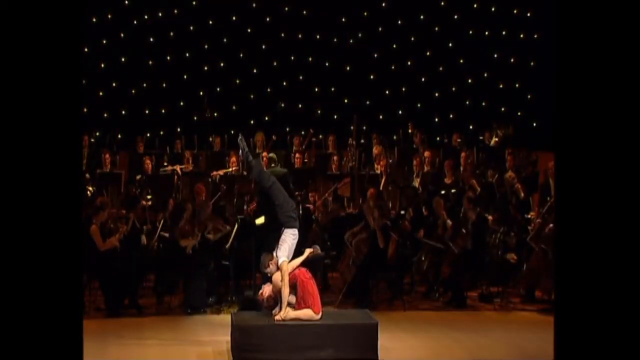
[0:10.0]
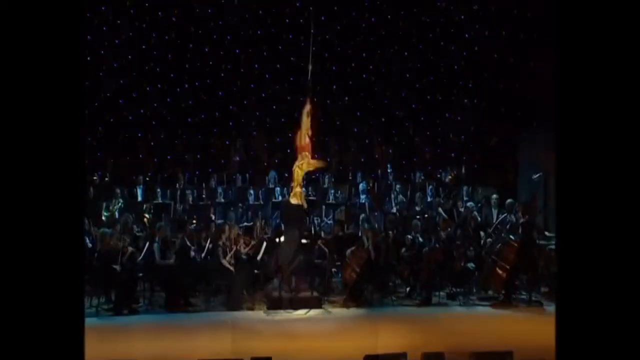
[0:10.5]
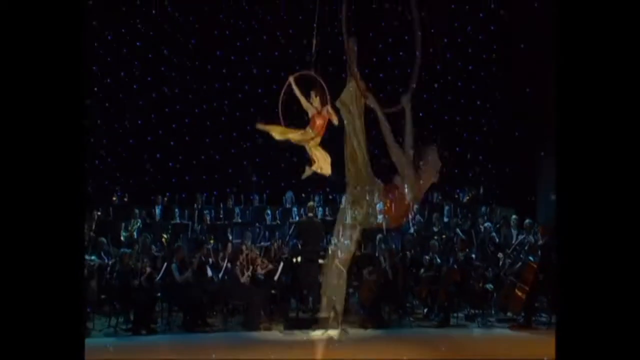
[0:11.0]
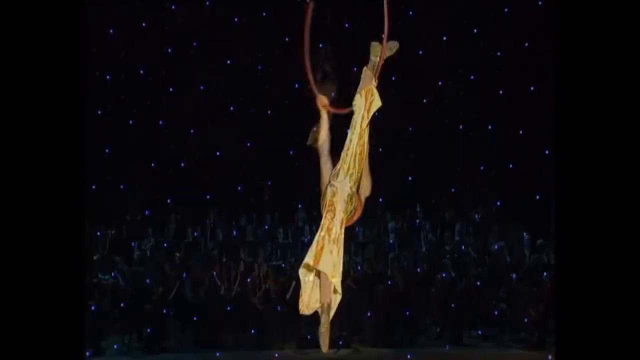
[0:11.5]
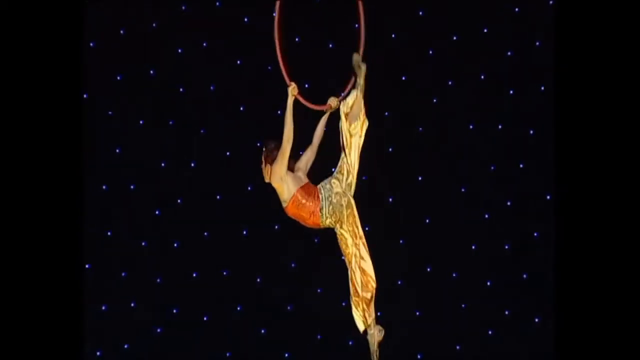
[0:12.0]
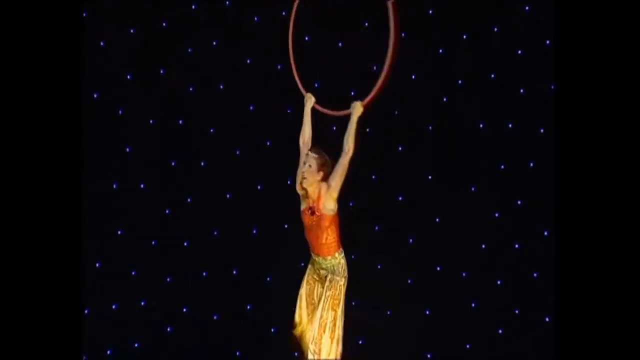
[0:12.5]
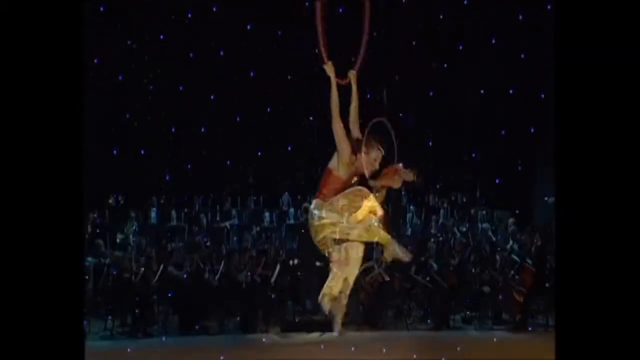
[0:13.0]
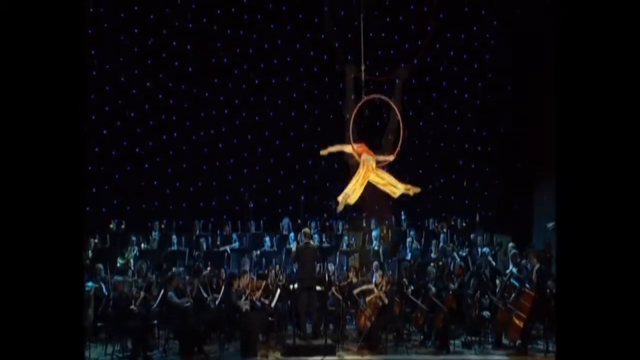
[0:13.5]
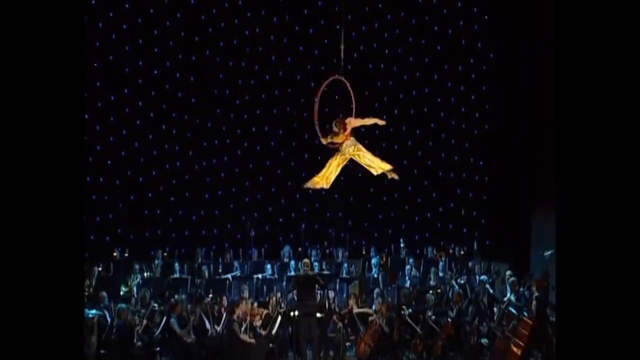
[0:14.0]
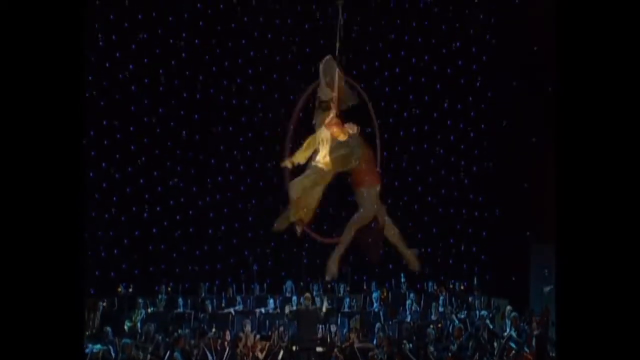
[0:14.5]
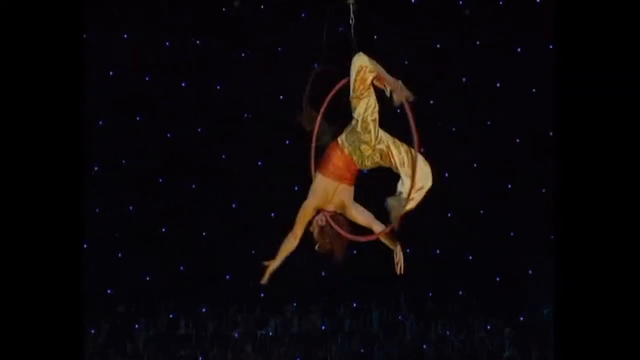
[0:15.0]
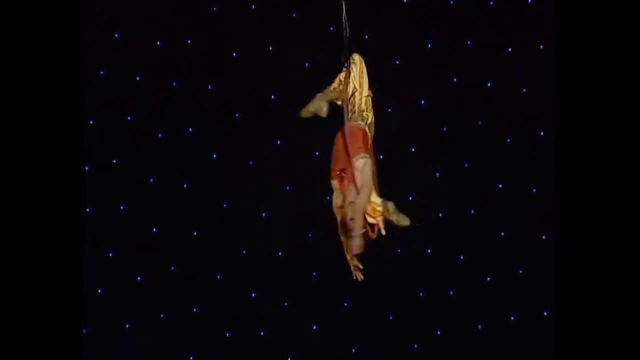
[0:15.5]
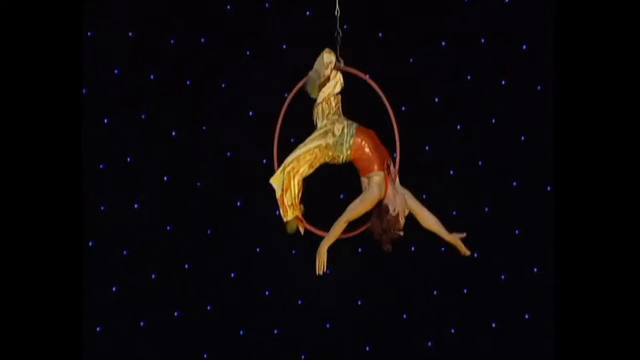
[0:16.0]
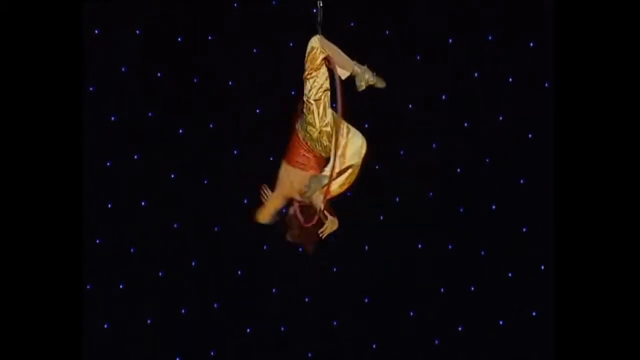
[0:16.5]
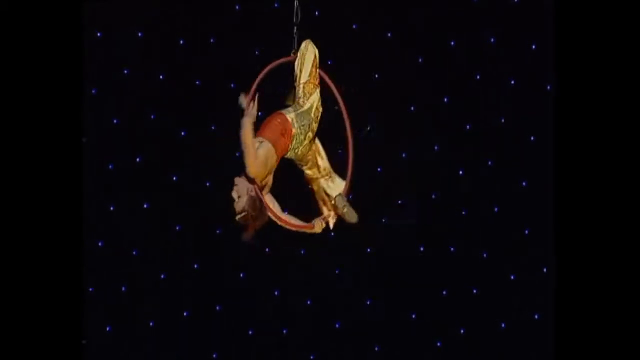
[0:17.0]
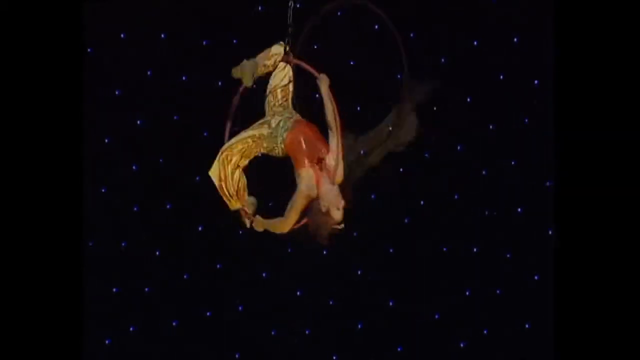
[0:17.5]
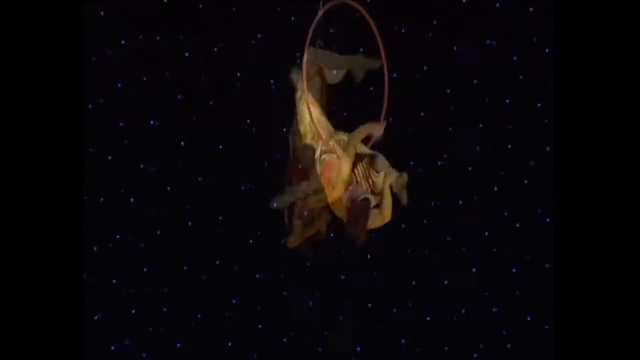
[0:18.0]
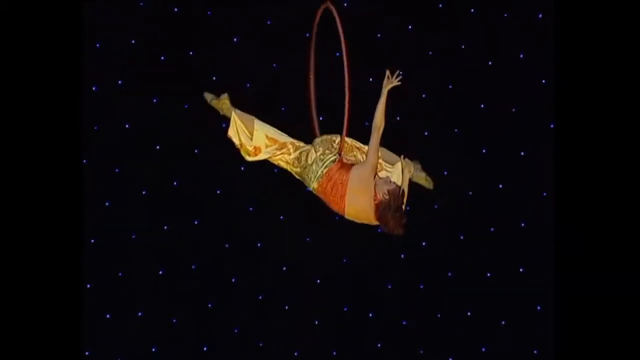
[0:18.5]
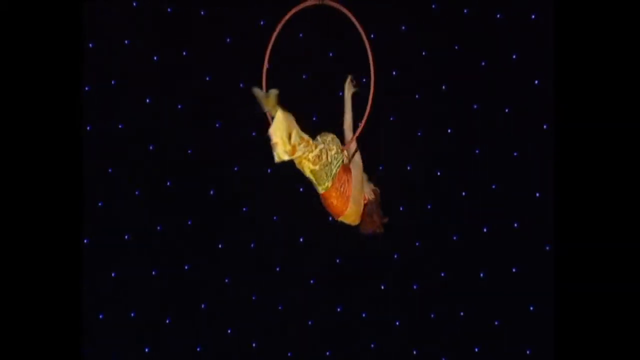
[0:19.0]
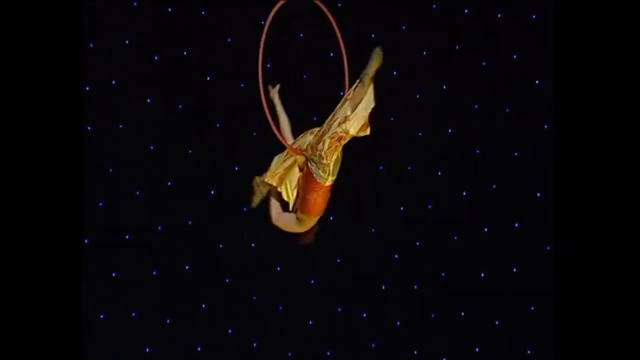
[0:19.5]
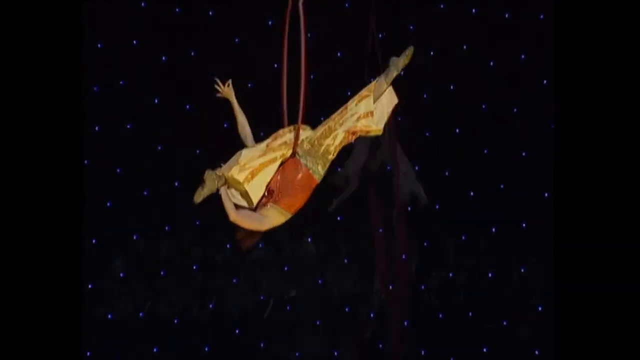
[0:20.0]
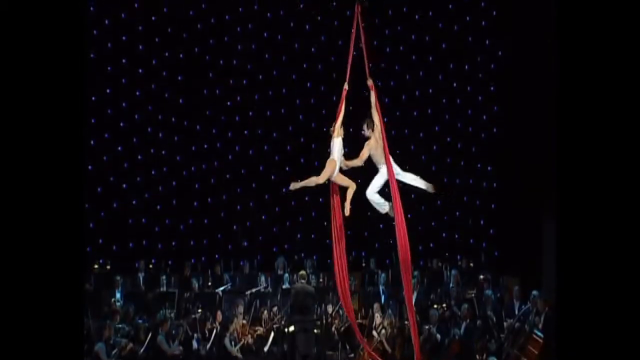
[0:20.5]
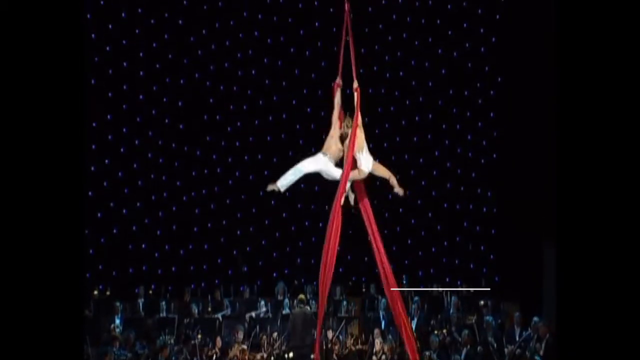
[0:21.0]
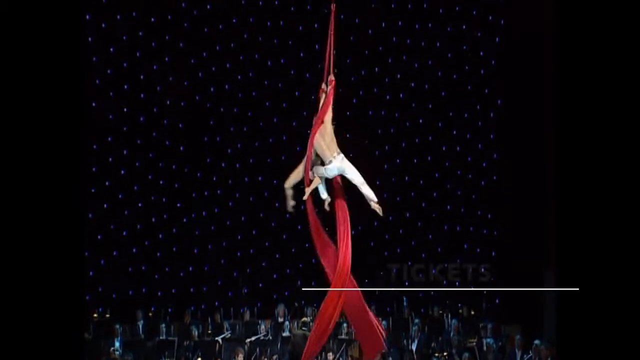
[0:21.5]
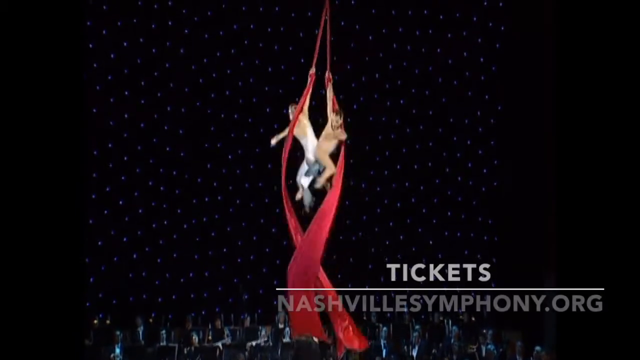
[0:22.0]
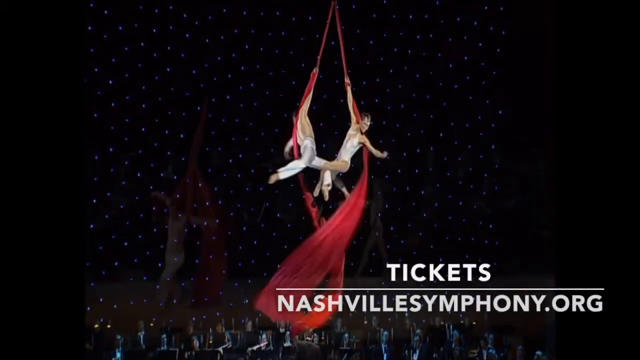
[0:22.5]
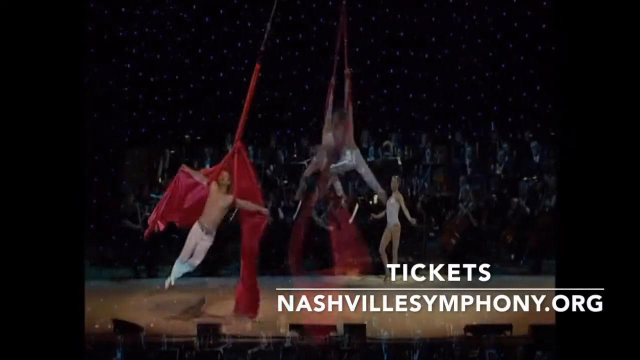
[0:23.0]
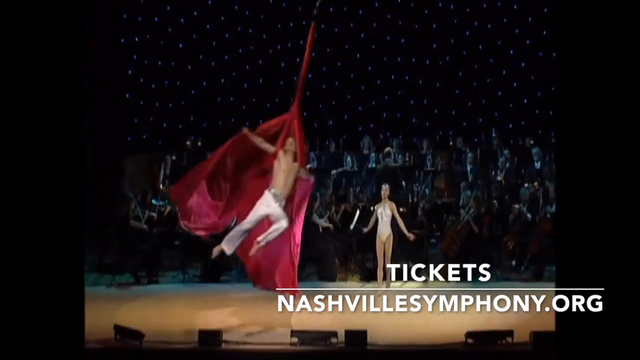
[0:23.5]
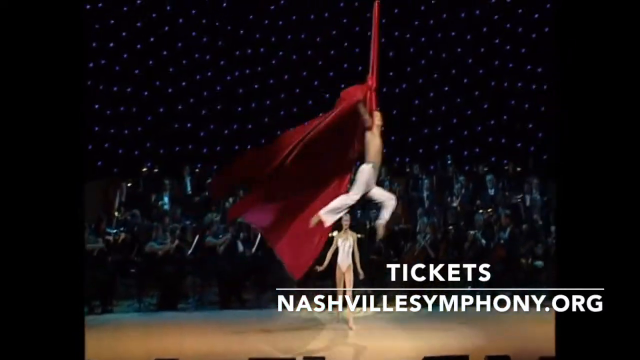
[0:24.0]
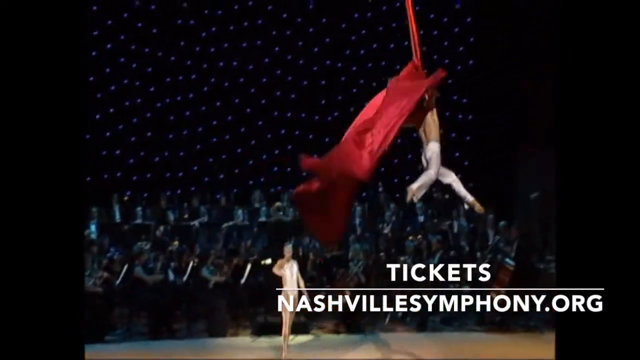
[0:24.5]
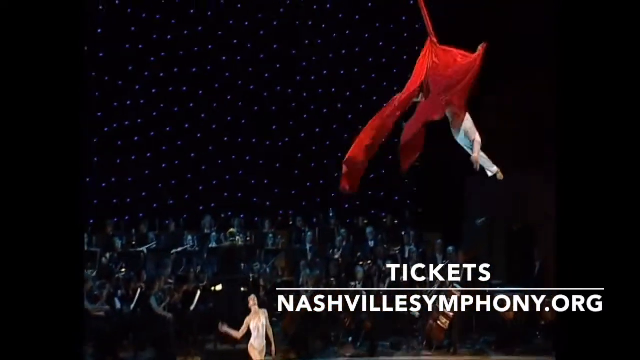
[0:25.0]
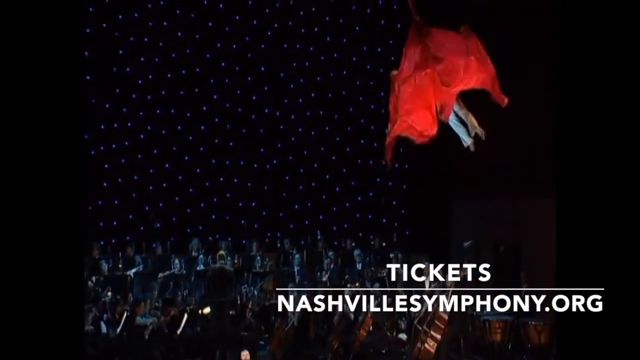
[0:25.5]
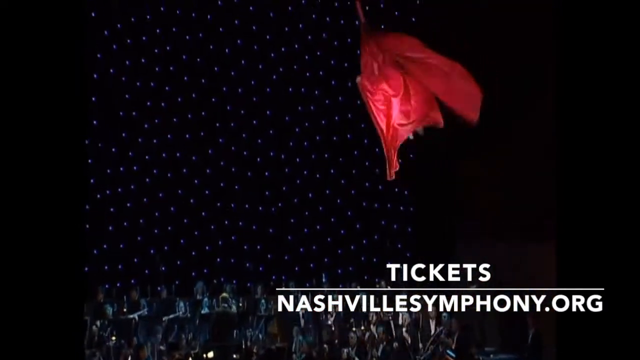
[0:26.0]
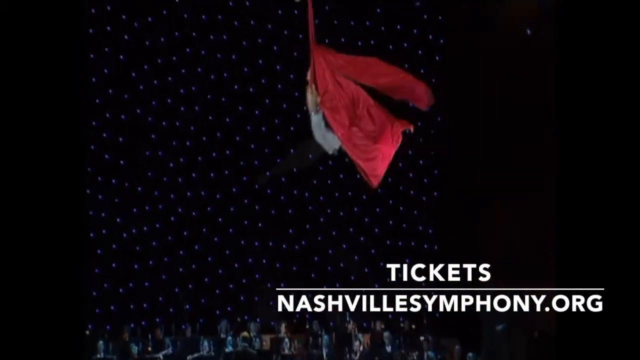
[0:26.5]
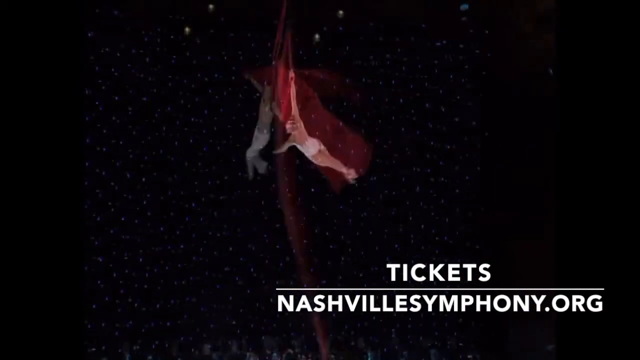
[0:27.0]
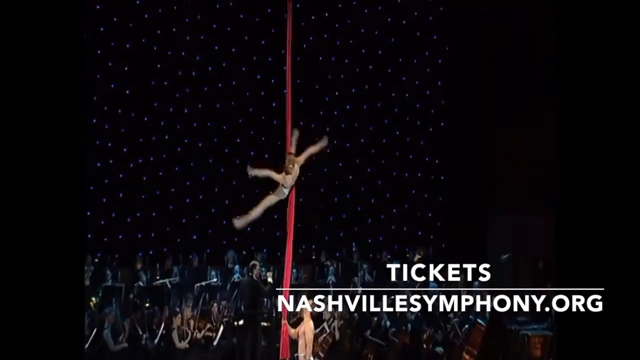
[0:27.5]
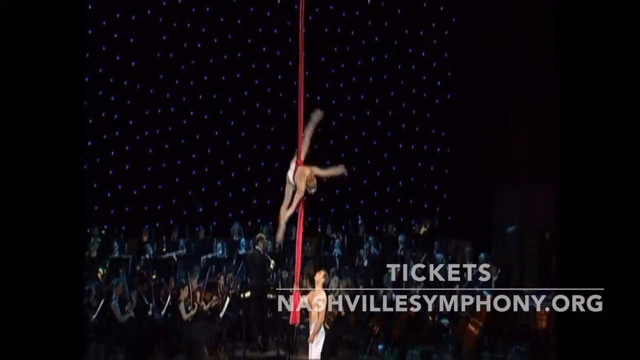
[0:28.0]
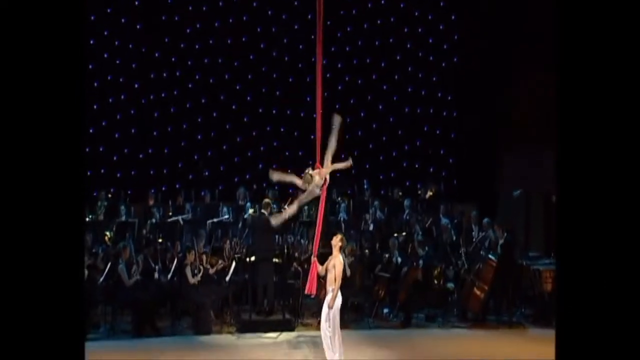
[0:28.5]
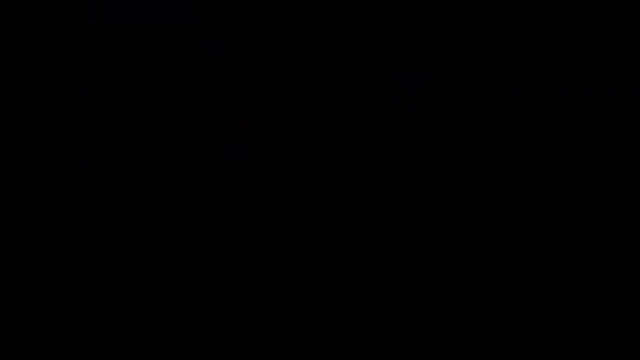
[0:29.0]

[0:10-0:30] The couple performs one of these complex demonstrations. The woman, in her red suit, is on her knees, stretching back in a very flexible way, while the man is on top of her with his arms on the ground and his legs up in the air, keeping his balance without falling. In another scene, the woman does more acrobatics on a ring that lifts her to the ceiling. Two other acrobats, a woman and a man, go up to the ceiling on two very long red ribbons, spinning with two legs together to maintain the axis of rotation. Text on the right reads "TICKETS NASHVILLESYMPHONY.ORG". In the background, another acrobat is lifted to the ceiling on a red ribbon, using it as if it were a superhero cape. The video ends with a woman spinning again on one of the red ribbons before reaching the arms of another acrobat.